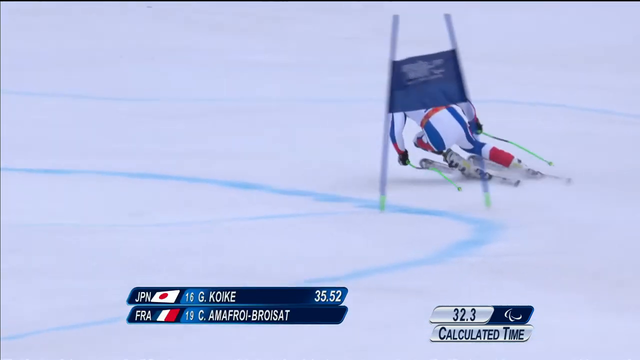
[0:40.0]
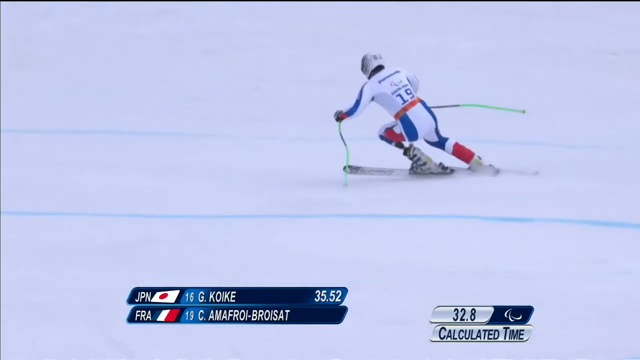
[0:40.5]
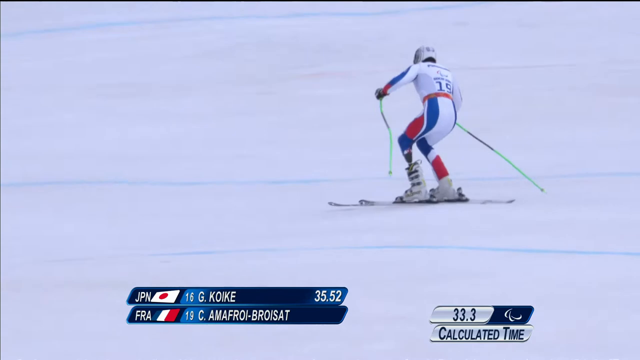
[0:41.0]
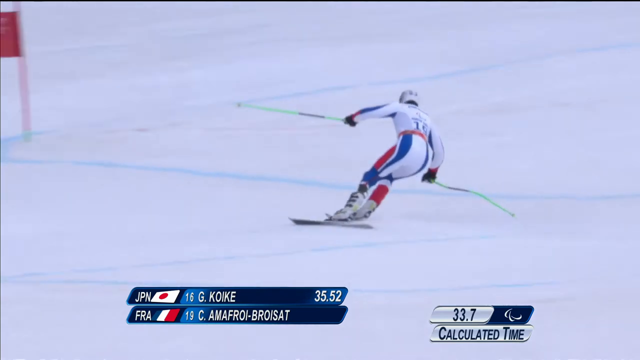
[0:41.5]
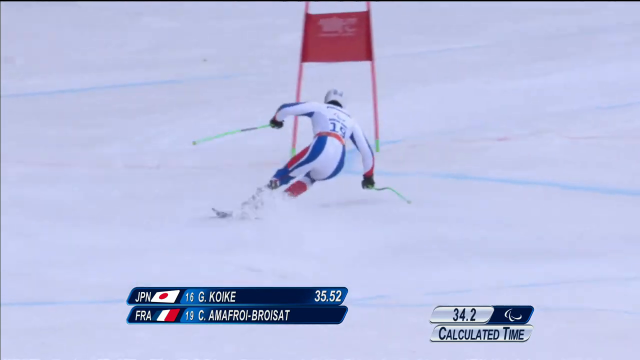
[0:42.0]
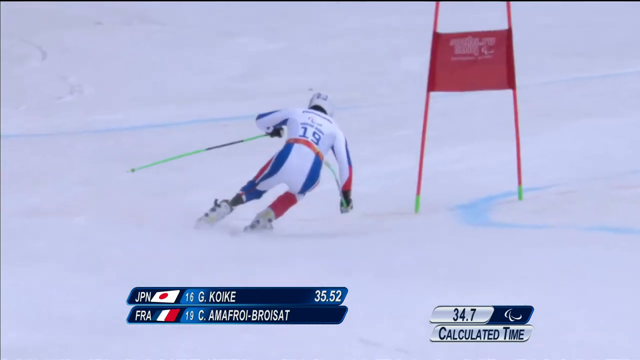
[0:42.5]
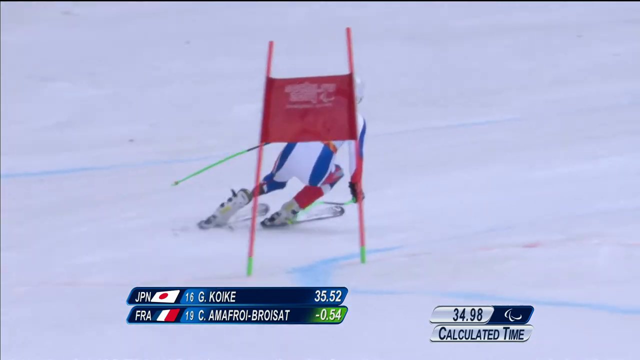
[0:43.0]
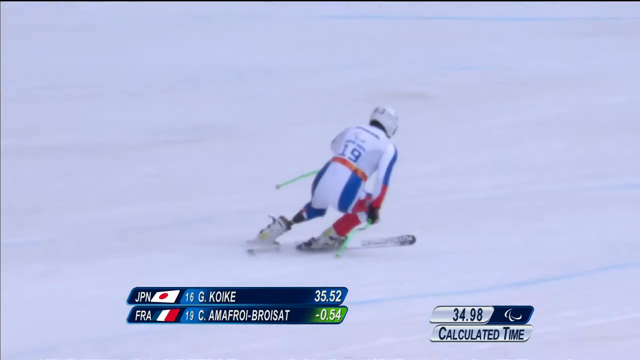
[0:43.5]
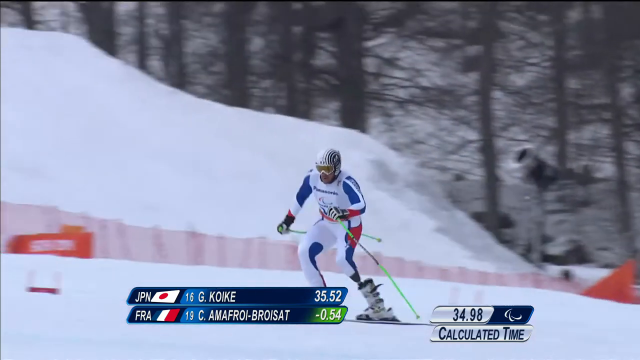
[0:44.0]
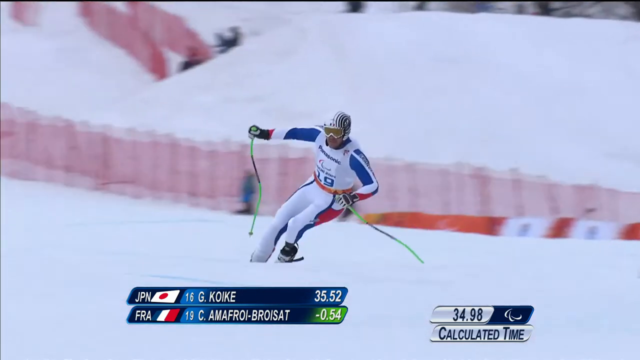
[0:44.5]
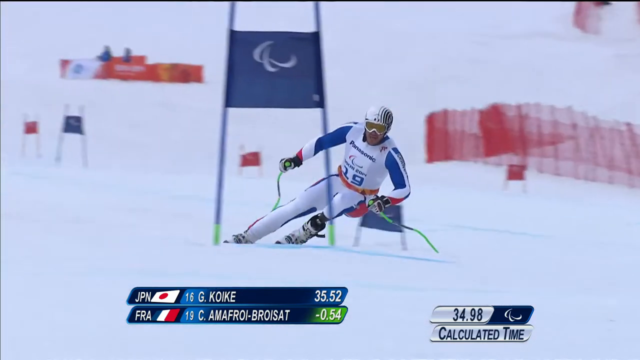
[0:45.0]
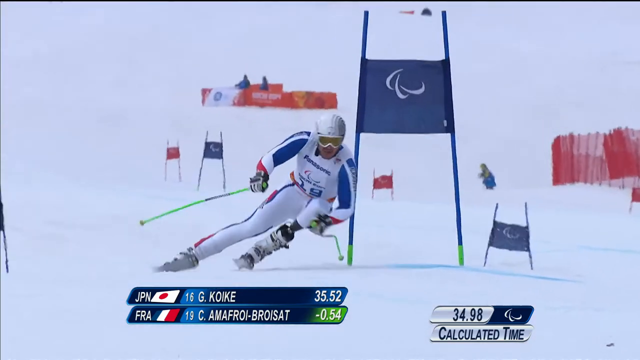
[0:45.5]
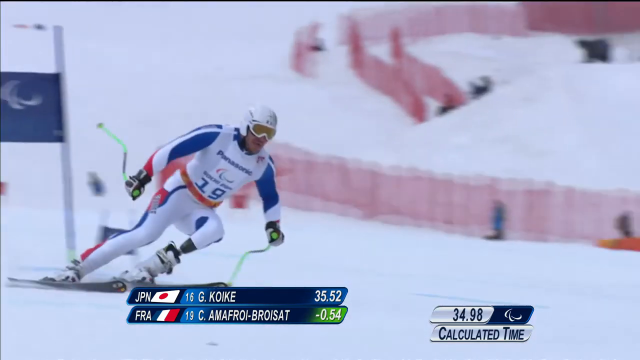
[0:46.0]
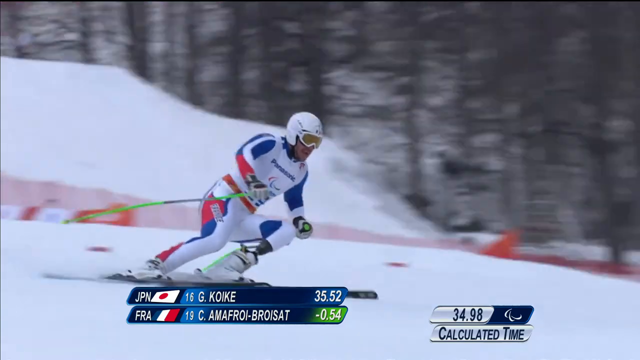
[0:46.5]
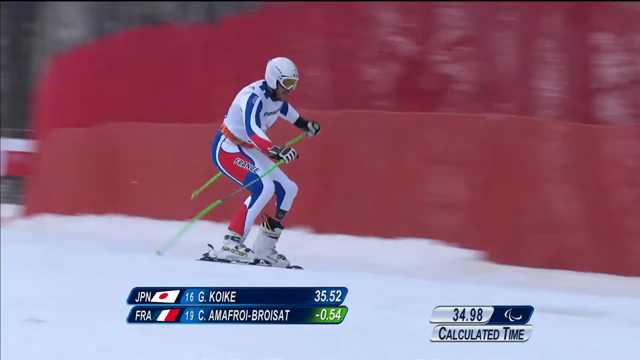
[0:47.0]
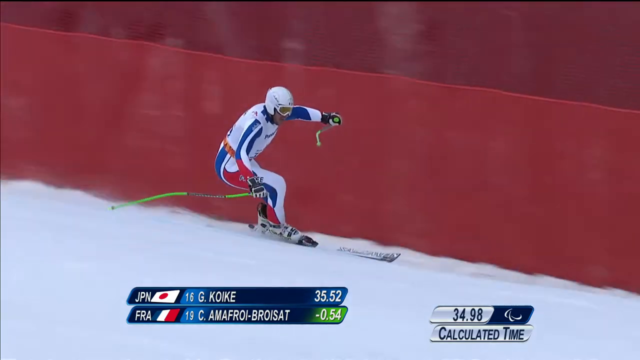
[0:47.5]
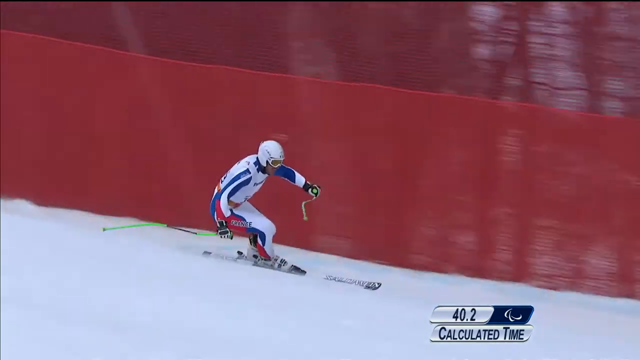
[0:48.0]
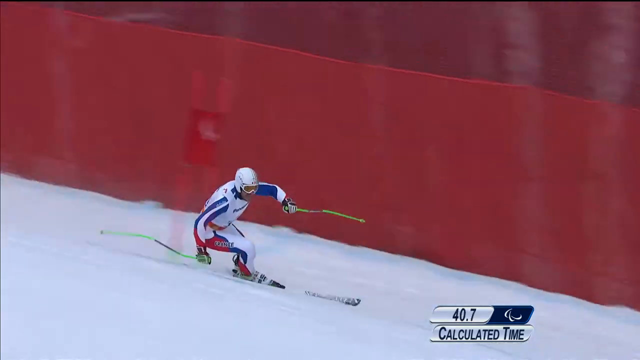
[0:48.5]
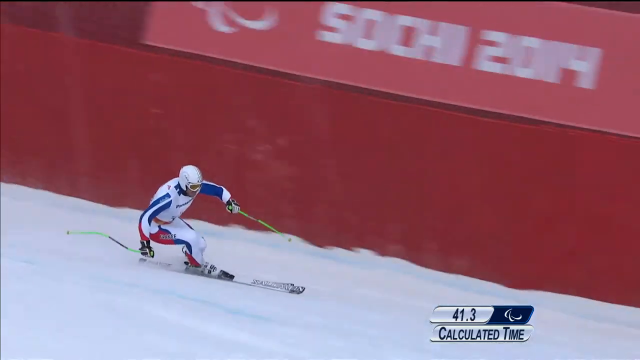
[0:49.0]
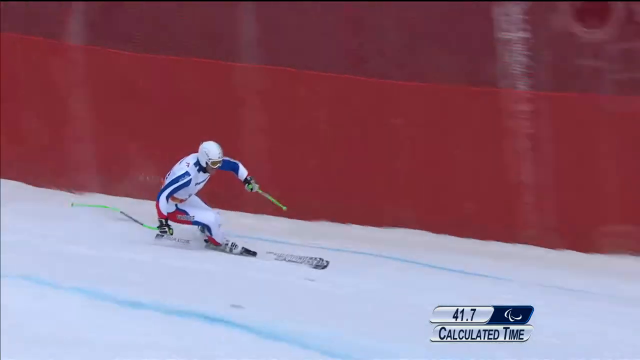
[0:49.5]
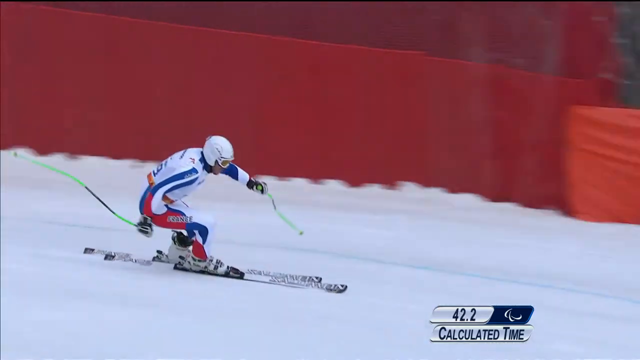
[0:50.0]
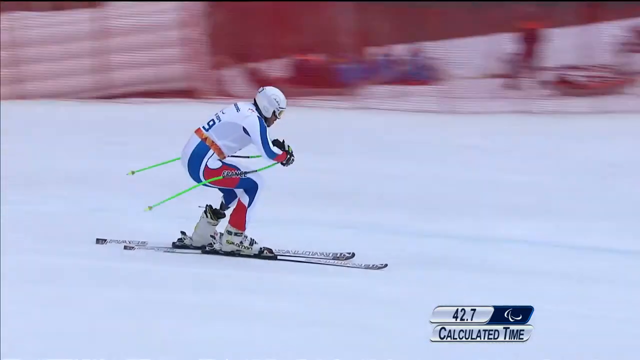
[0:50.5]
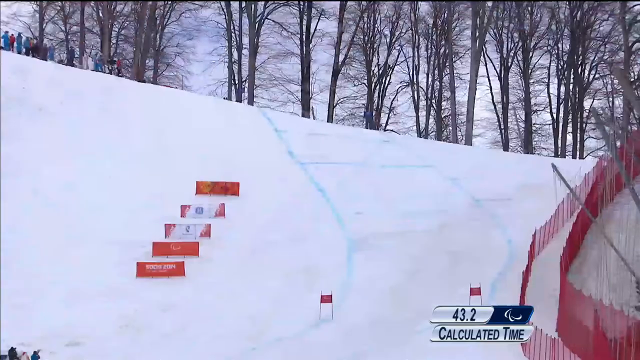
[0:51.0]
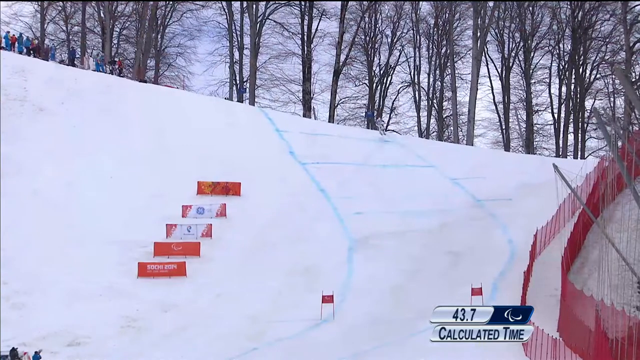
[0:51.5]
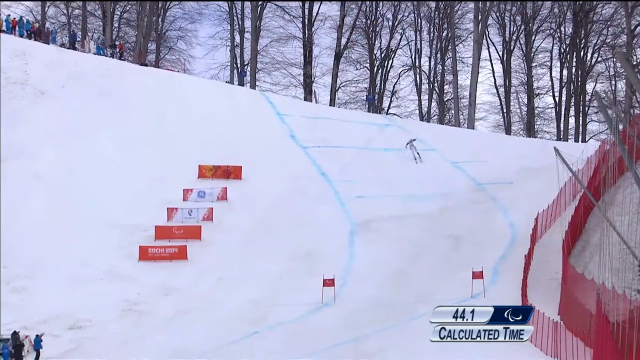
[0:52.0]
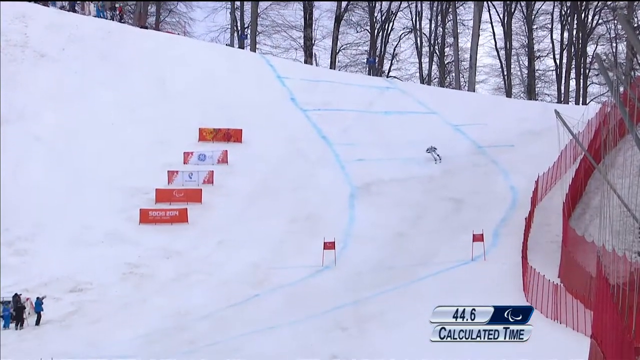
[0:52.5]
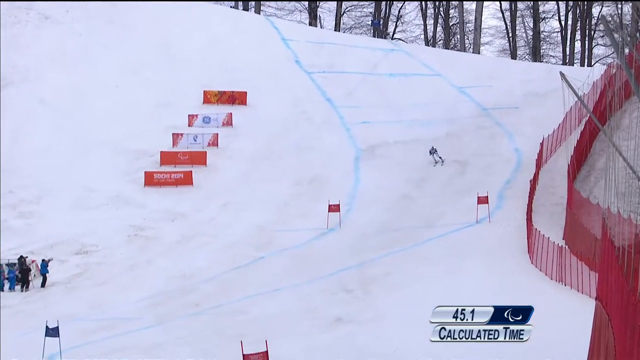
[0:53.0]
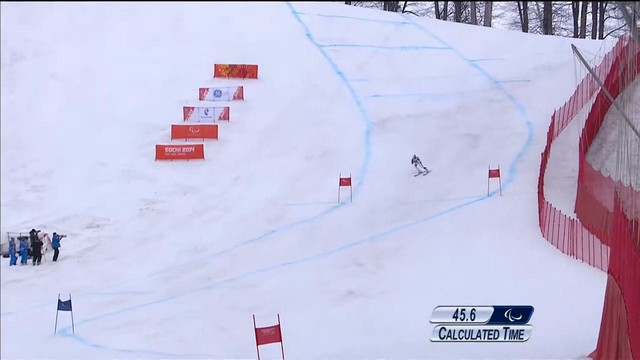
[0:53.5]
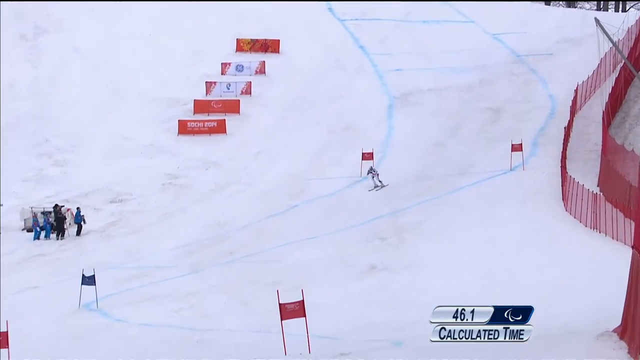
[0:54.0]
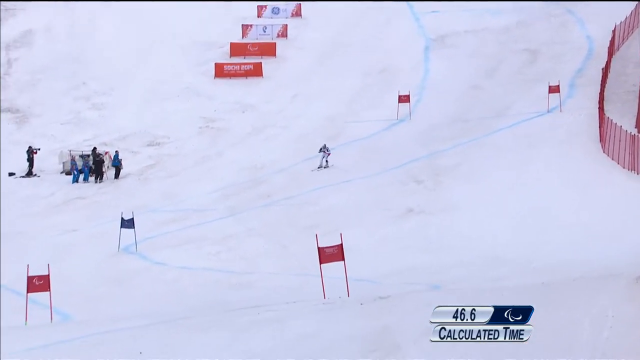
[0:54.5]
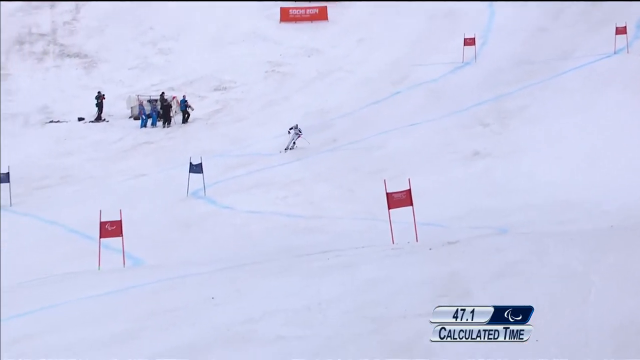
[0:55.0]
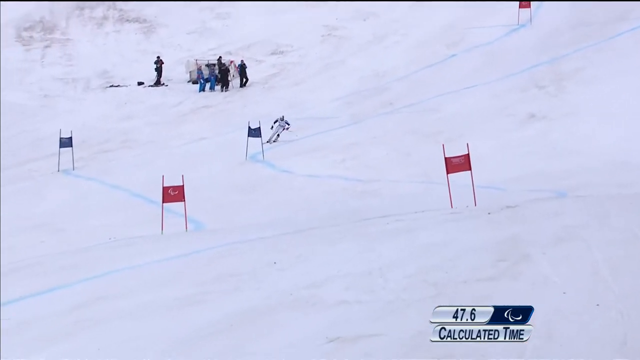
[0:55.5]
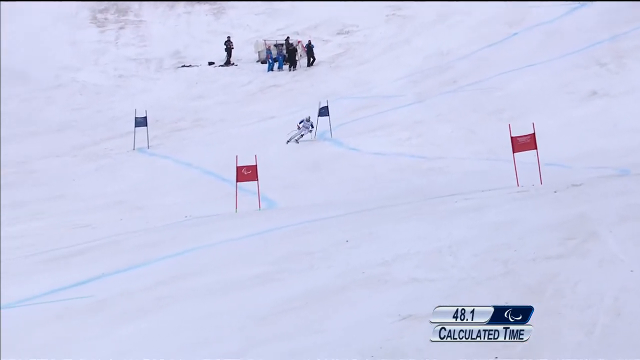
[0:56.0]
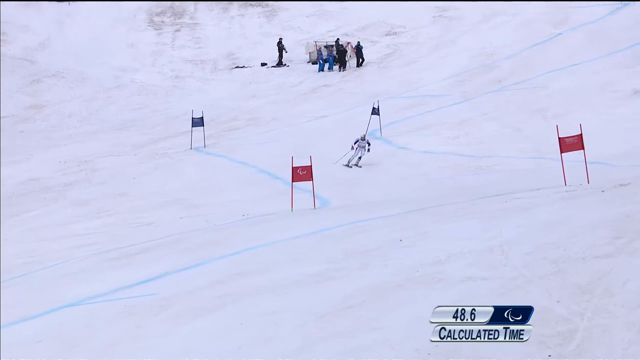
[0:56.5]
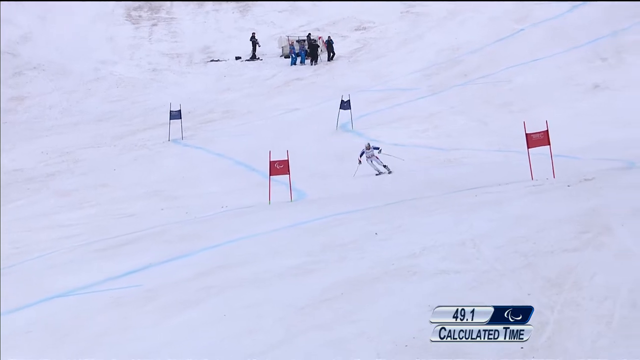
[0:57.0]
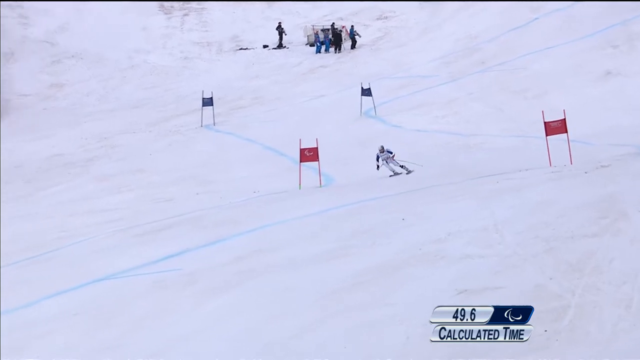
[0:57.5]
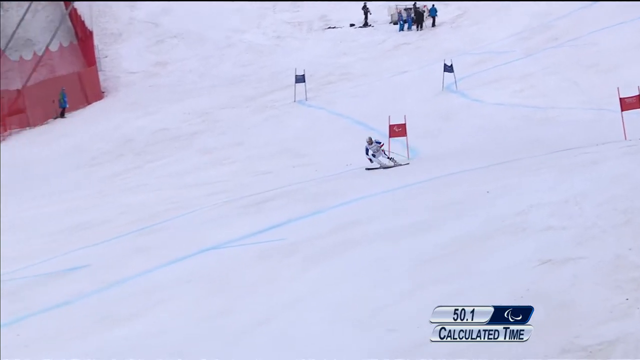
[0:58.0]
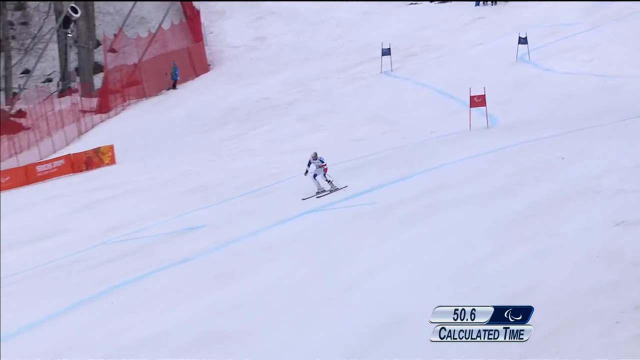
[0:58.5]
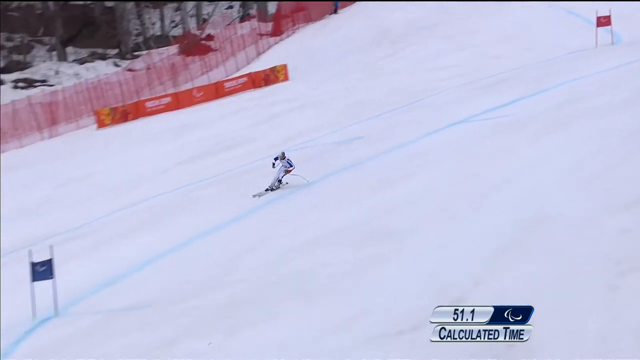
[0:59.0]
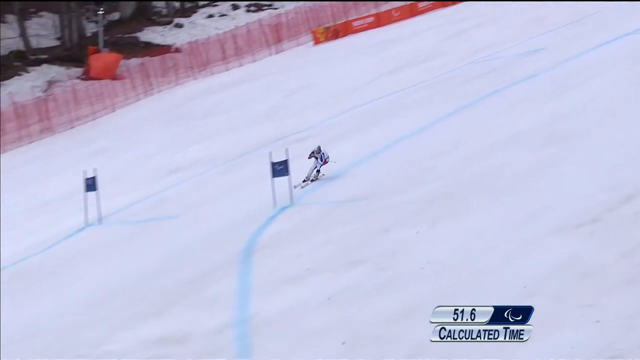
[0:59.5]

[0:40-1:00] He curves through a very tight corner as the camera zooms in on him, and he continues going back and forth. Midway through, he goes over a hill and comes down almost jumping, with a little air time. He is going fast down this hill, apparently at least around 30 miles per hour, and he seems to be nearing the end of the run. Just before the end, the times are shown on screen: Japan, listed above, at 35 seconds, and apparently the France team skier listed underneath Japan at 32.4 seconds.